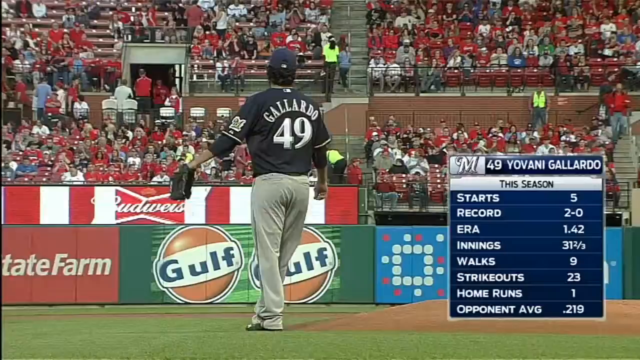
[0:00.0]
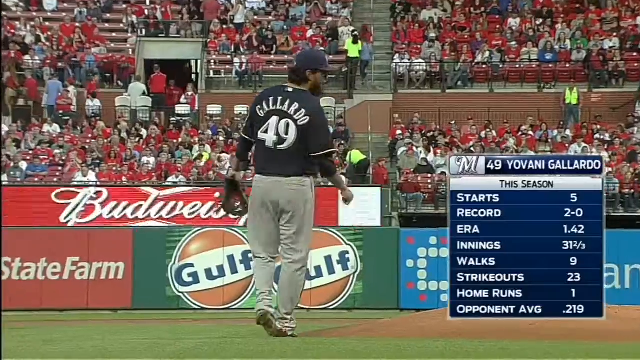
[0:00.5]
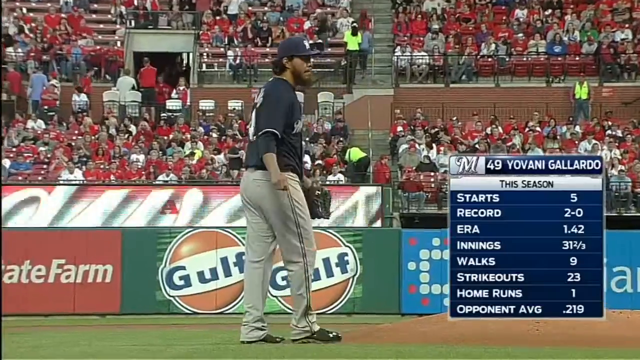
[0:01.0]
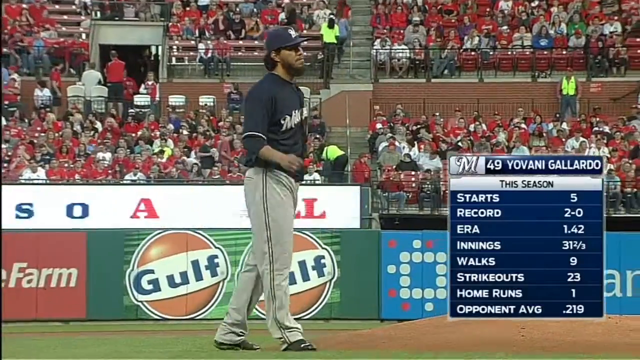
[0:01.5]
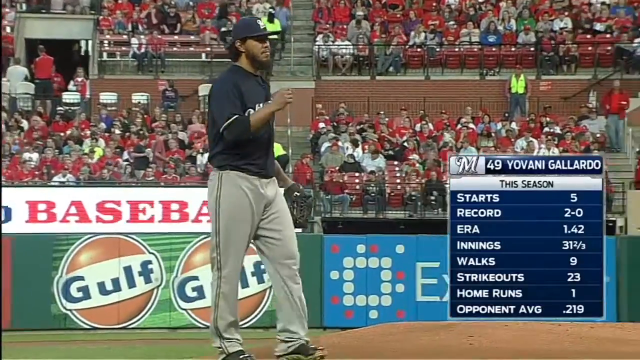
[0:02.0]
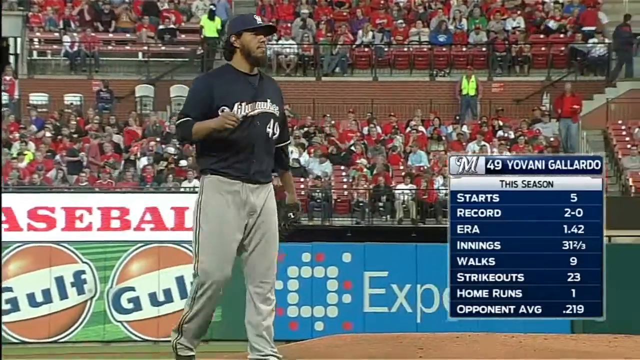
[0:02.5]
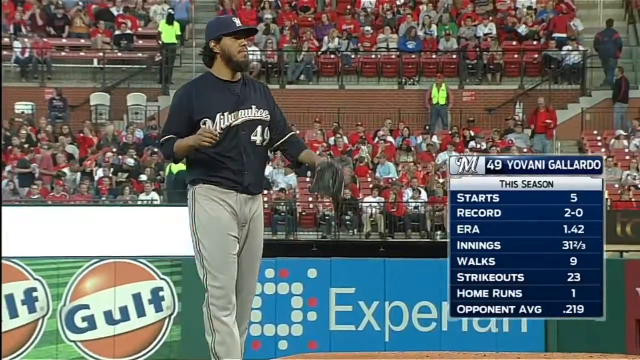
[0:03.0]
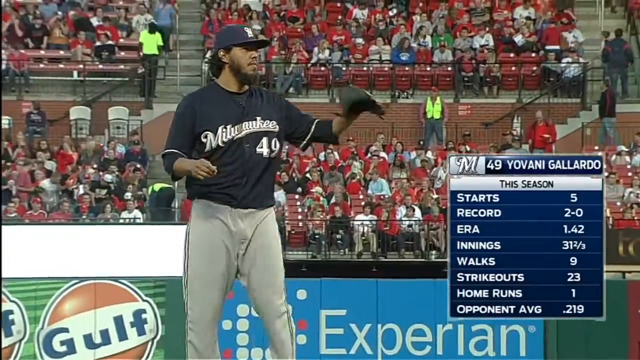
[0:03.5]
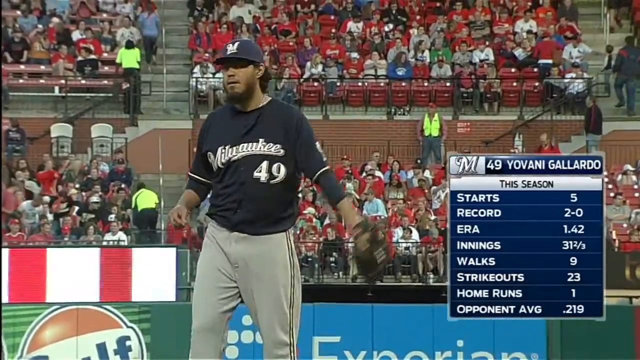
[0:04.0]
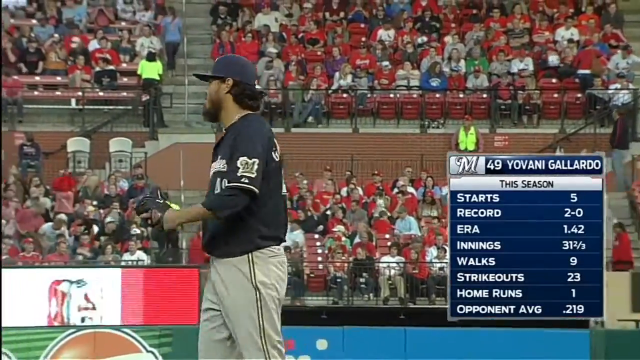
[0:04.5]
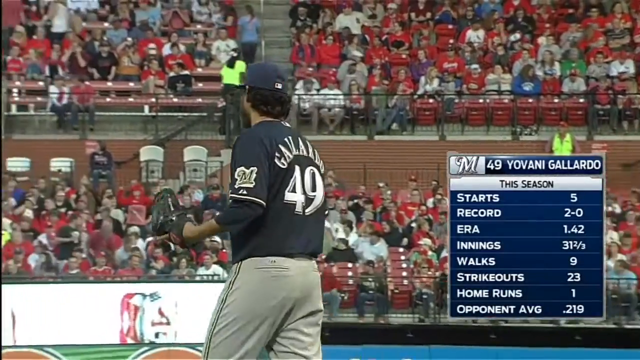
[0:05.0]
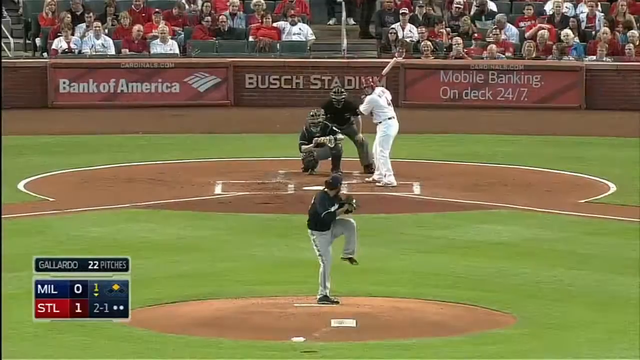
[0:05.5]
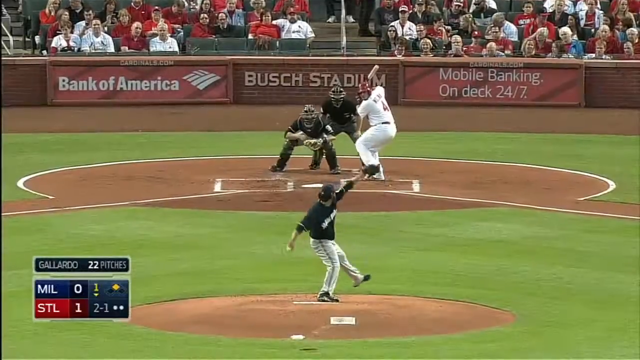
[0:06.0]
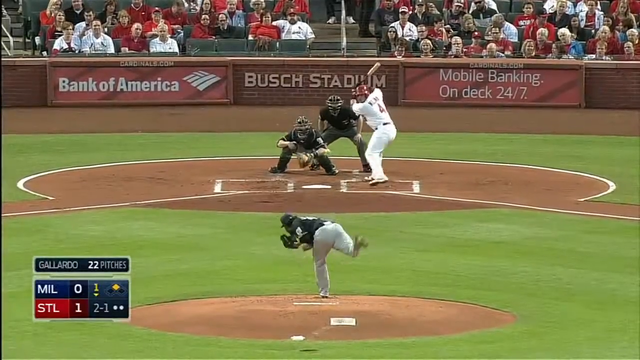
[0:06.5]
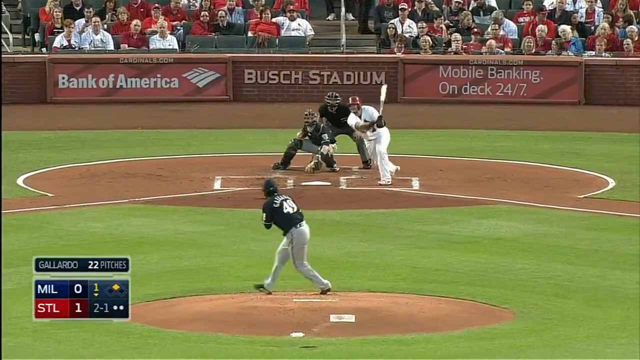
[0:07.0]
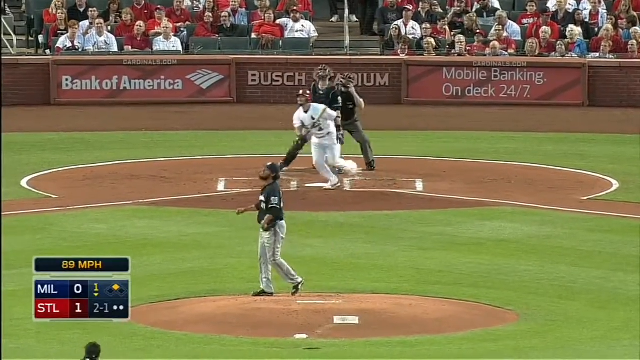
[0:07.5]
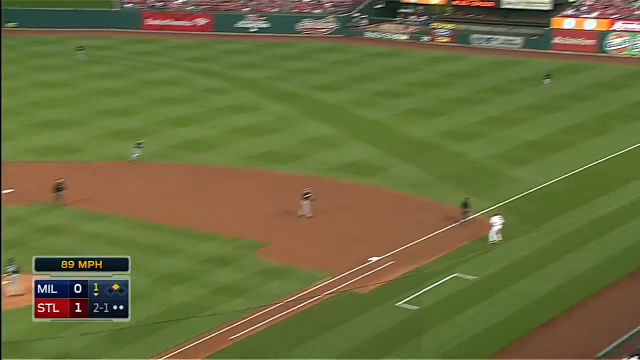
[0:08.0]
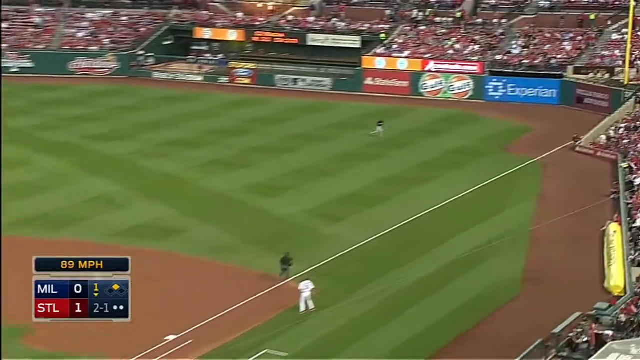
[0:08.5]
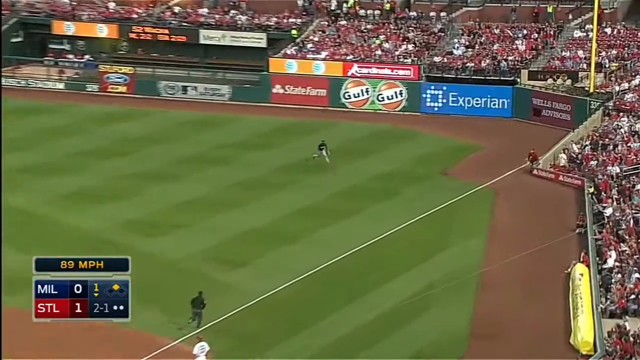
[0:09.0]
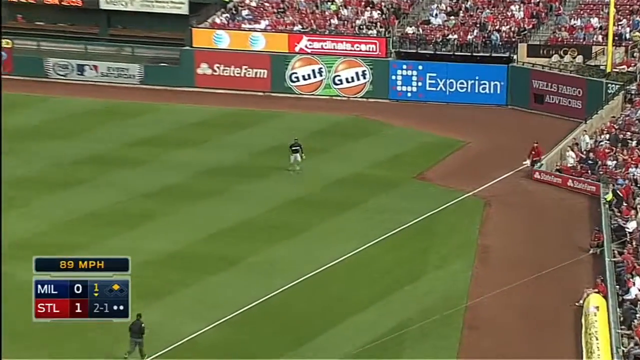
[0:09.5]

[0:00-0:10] A live baseball game is underway, showing a bearded Milwaukee player who catches the ball with his glove and then pitches it. The batter hits the ball to the right side of the field and begins to run. The pitcher is number 49, and his stats appear on screen identifying him as 49 Giovanni Gallardo; the text reads "this season" and lists what he has done, including walks, starts and record. Many people in the stands are wearing red. Advertisements around the ballpark include golf, Budweiser, State Farm, Bank of America, a Bush sign and Experian. A long electronic sign flashes different messages, including one about baseball.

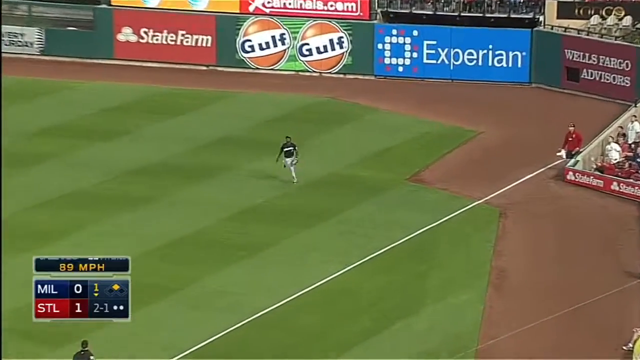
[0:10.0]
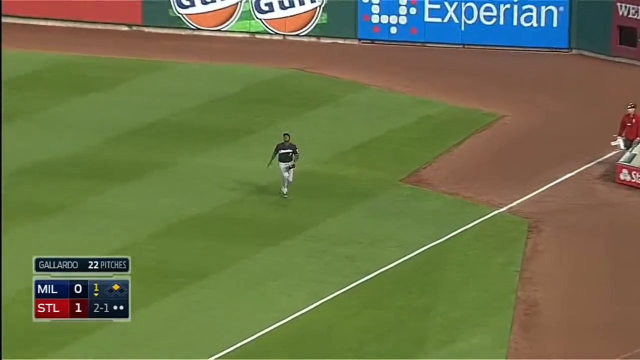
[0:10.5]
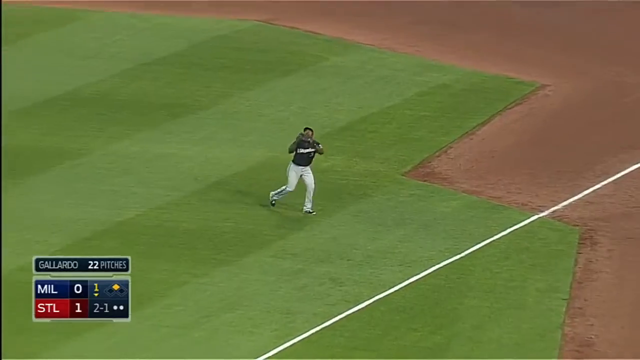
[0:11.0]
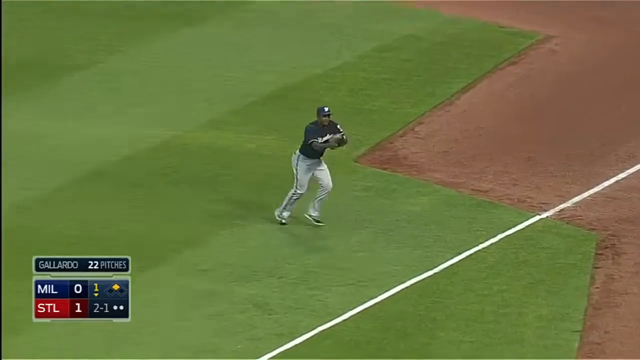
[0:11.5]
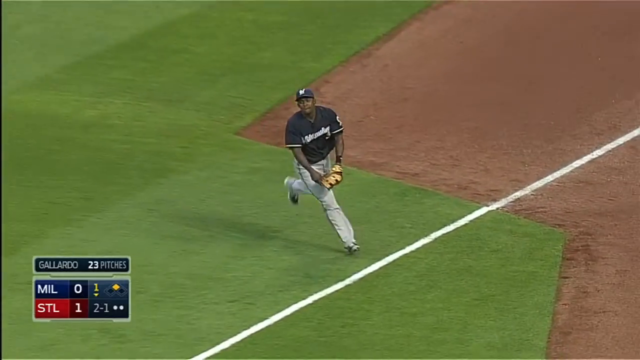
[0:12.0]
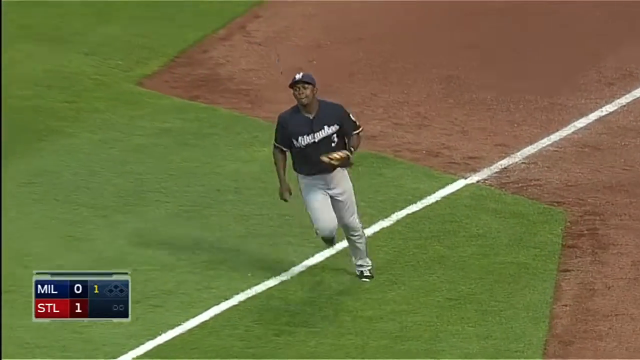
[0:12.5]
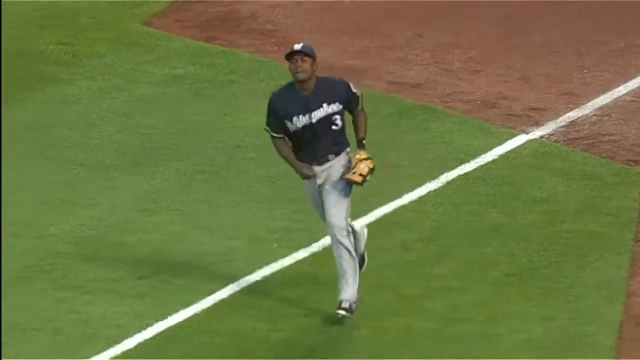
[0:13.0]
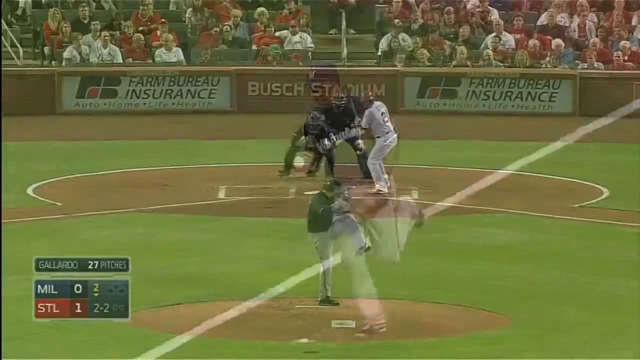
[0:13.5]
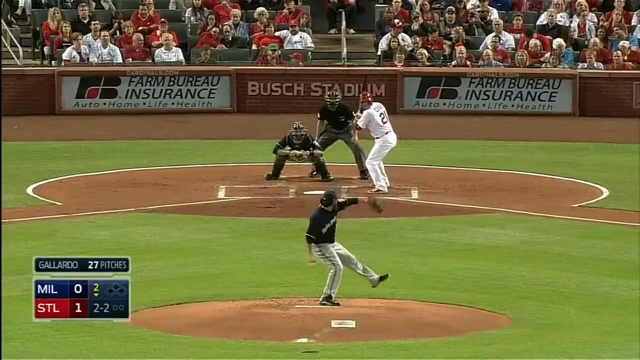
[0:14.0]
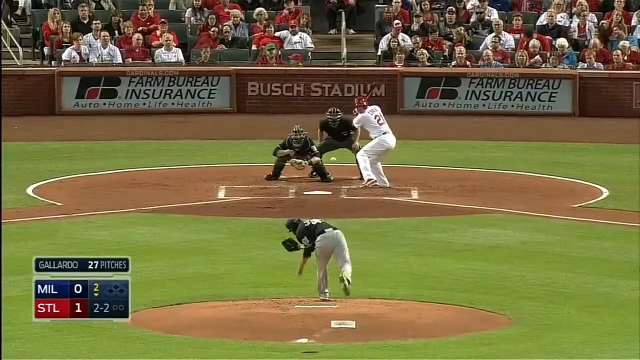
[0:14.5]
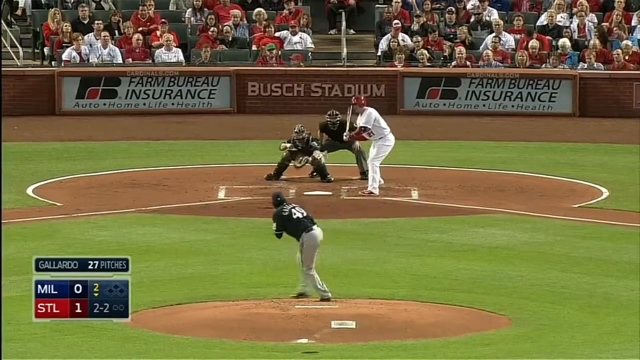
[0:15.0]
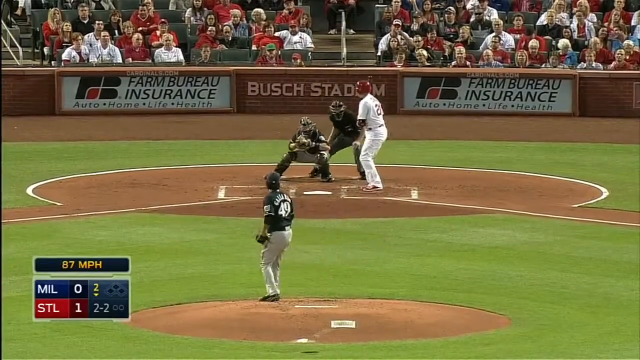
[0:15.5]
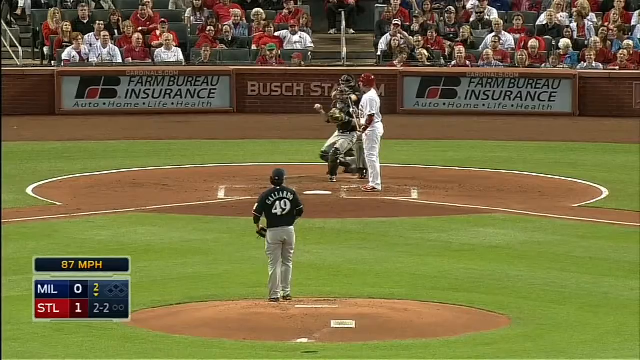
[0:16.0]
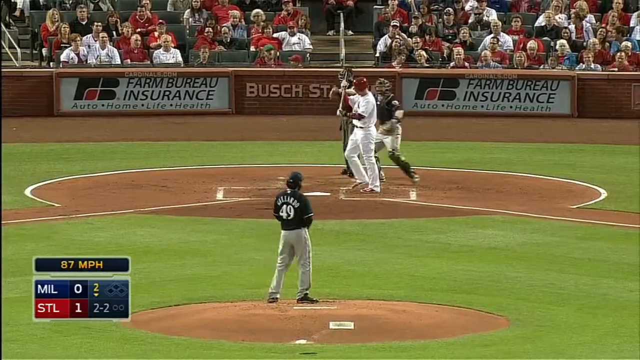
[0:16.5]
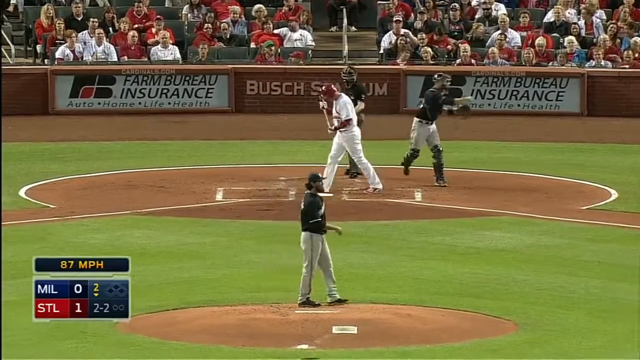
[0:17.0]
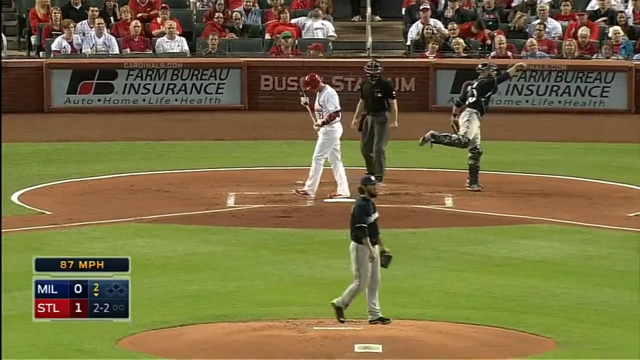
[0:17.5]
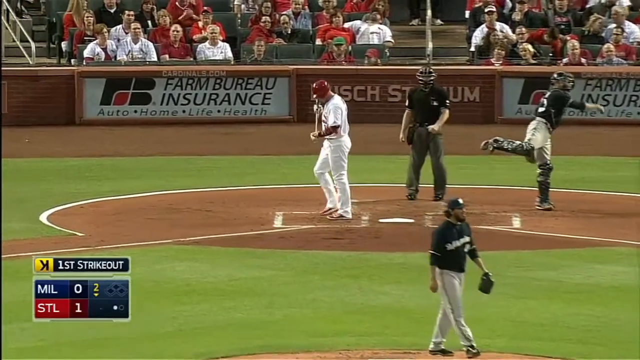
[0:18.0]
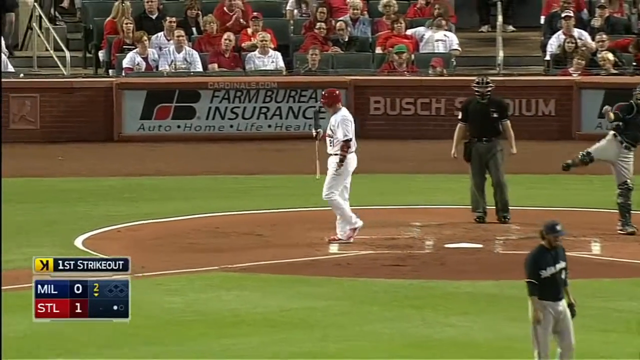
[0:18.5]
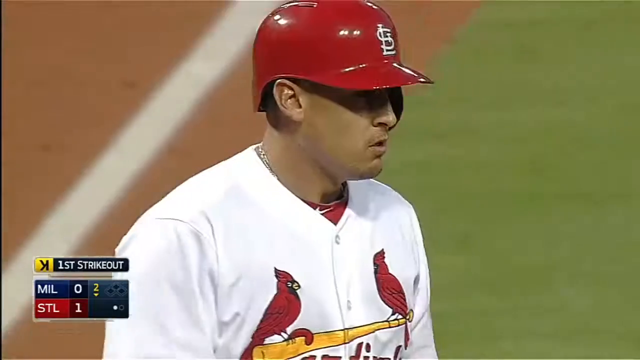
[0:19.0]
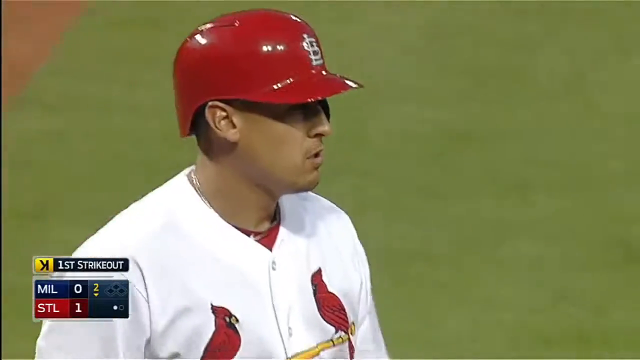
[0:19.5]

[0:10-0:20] In a live baseball game, a Milwaukee player, number three, catches the ball and runs with it. A Cardinal, with two red birds on his uniform, has been struck out. The stadium has many advertisements, including signs reading "Bush Stadium" and "farm bureau insurance", golf, State Farm and Wells Fargo Advisors, with an electronic rotating screen on top of them. A scoreboard in the lower left-hand side keeps track of the pitches. Many people in the stands are wearing red and look like Cardinal fans, and some seats in the stadium are still vacant.